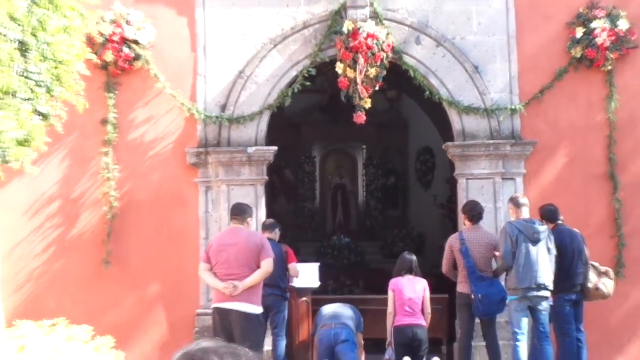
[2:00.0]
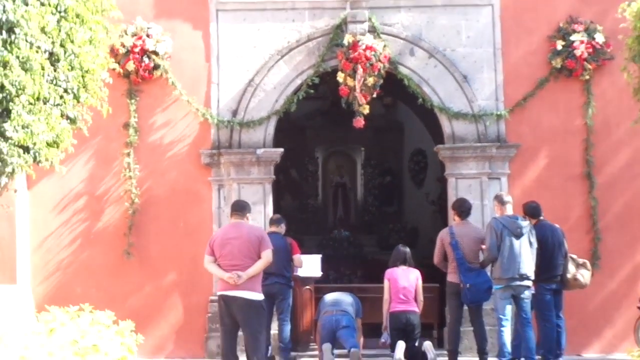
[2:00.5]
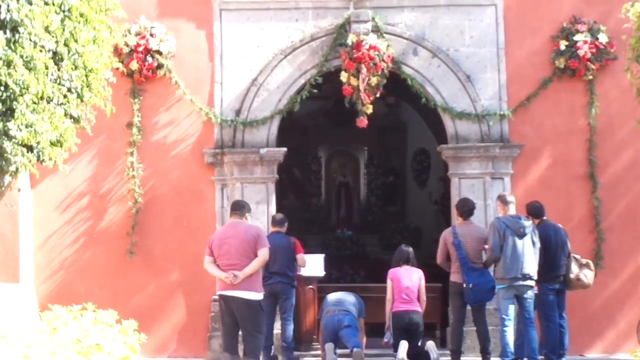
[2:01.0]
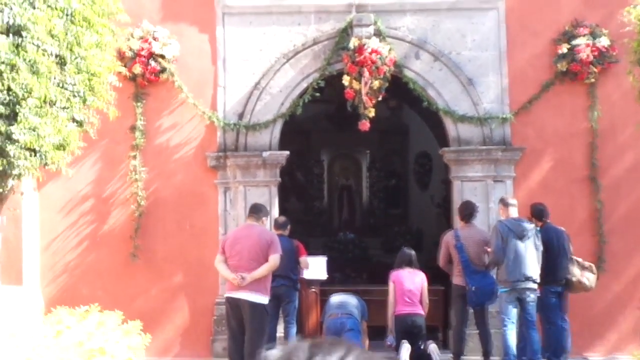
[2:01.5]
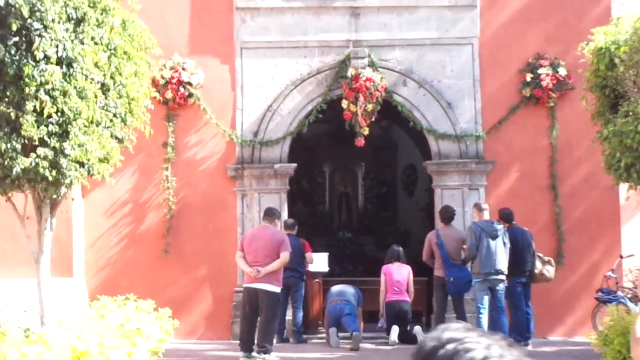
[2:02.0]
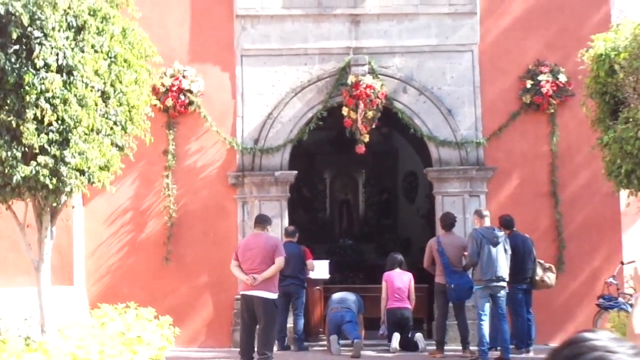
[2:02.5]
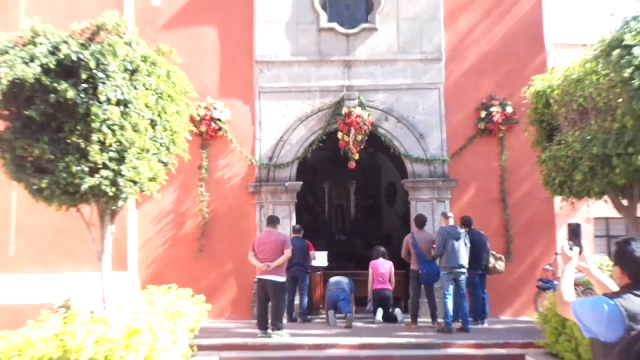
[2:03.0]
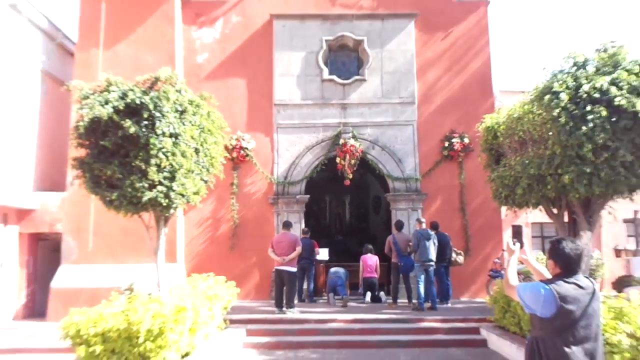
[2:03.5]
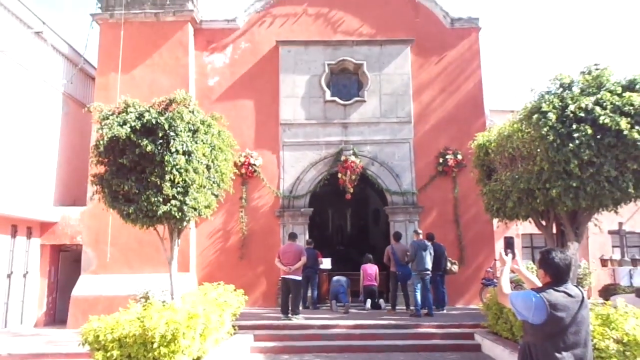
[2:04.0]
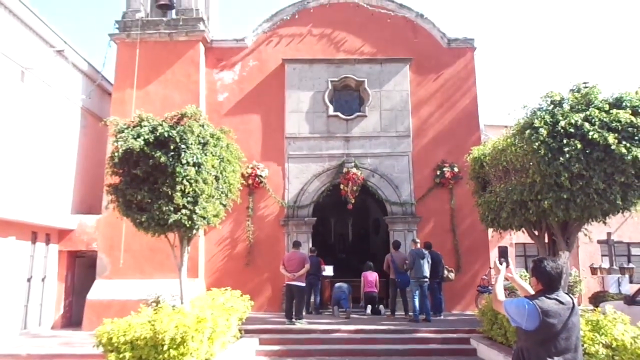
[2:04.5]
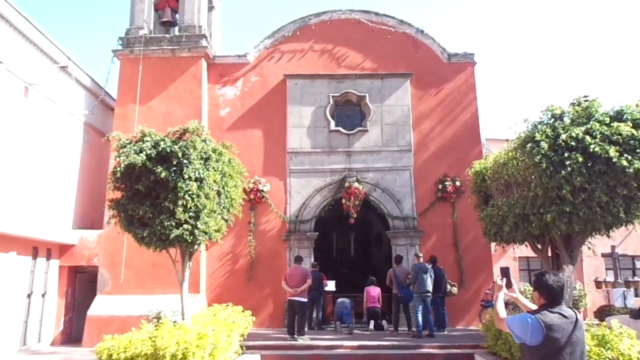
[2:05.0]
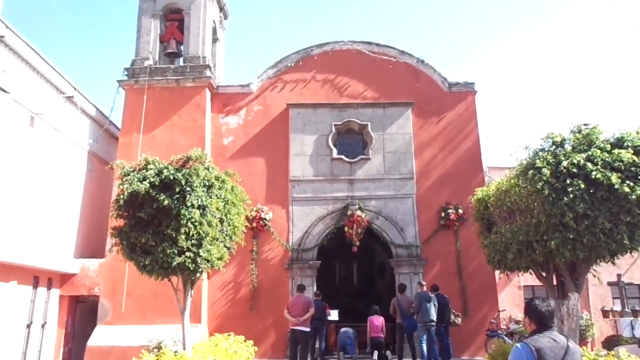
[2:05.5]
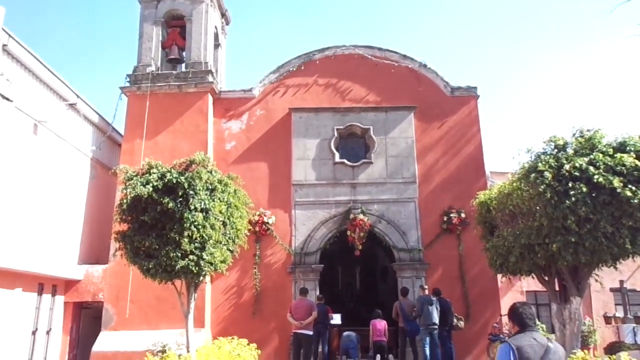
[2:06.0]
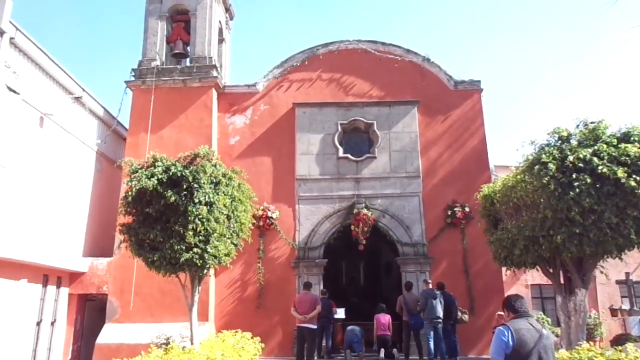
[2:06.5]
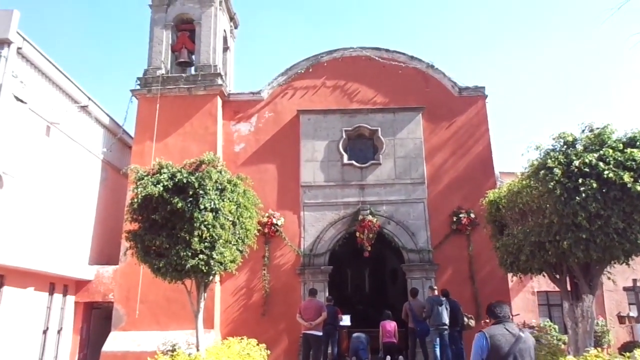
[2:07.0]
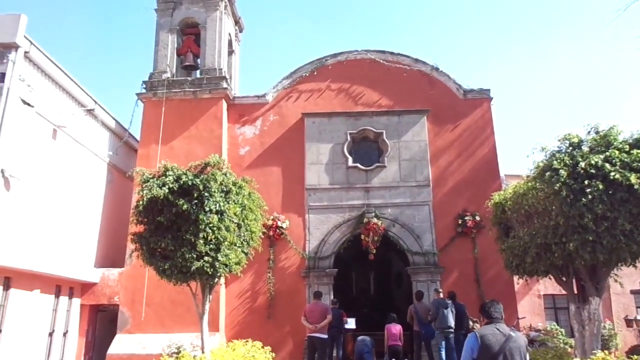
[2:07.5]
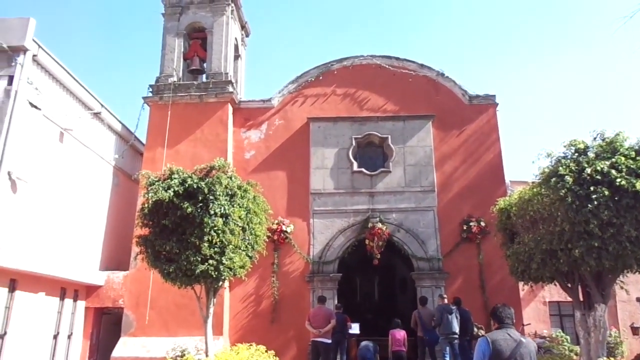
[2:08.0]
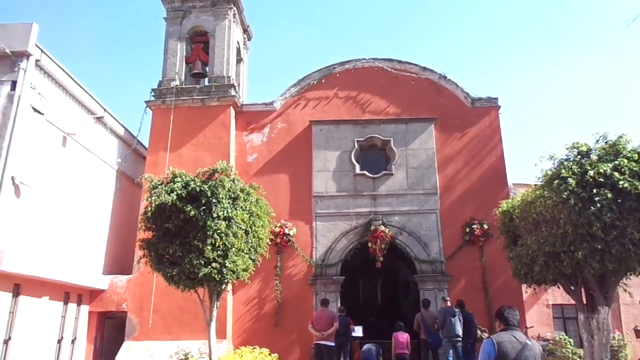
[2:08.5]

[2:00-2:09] The outside of a small church is quite plain. It is painted a kind of salmon colour, with a section of white stone. It has one single round window and a big archway doorway. Floral pieces hang from the doorway on either side, all connected with a green garland. Around six people are stood in the doorway. The camera pans back to show the full church, and a man with a video camera is filming from the bottom of the steps. The view then turns towards the stone bell tower on the left-hand side.